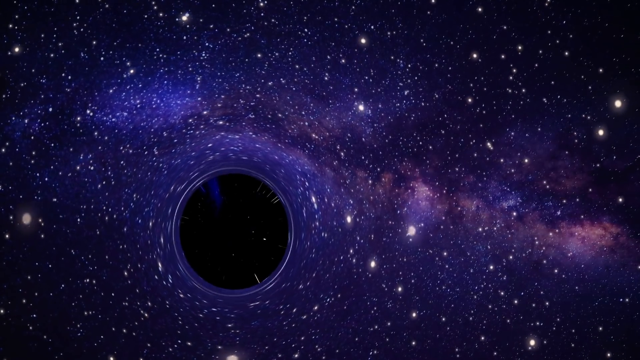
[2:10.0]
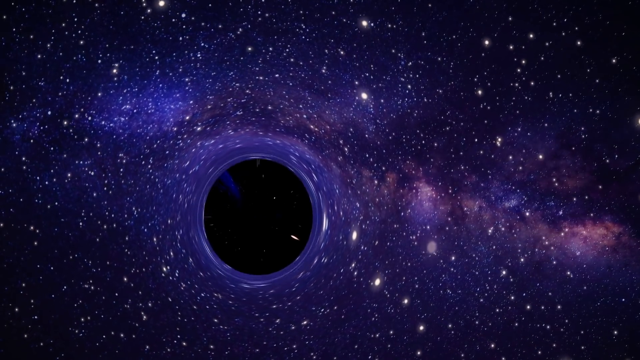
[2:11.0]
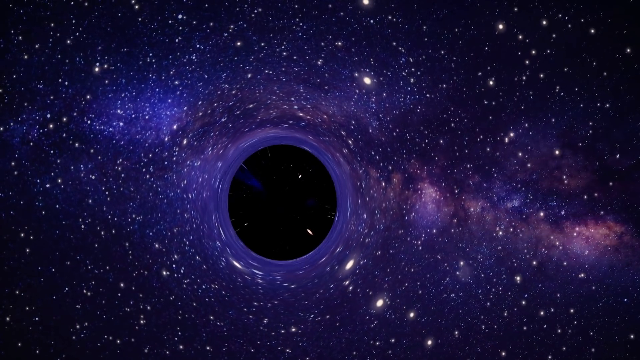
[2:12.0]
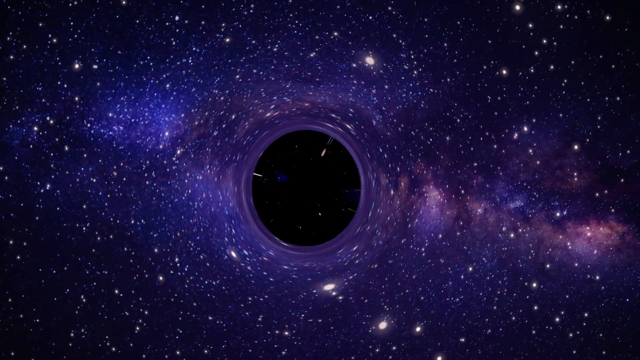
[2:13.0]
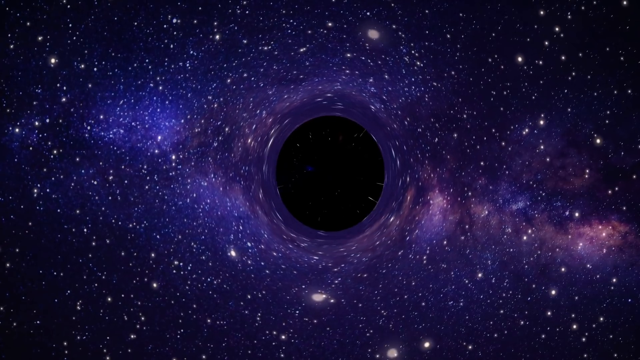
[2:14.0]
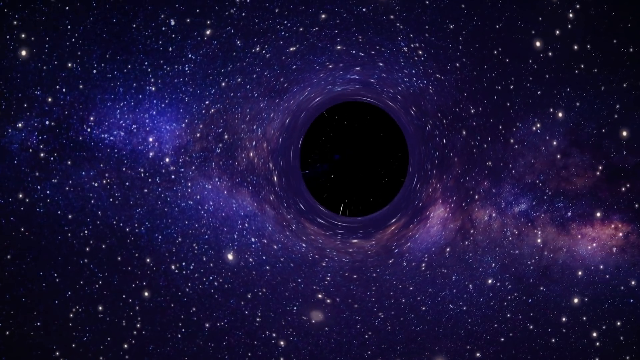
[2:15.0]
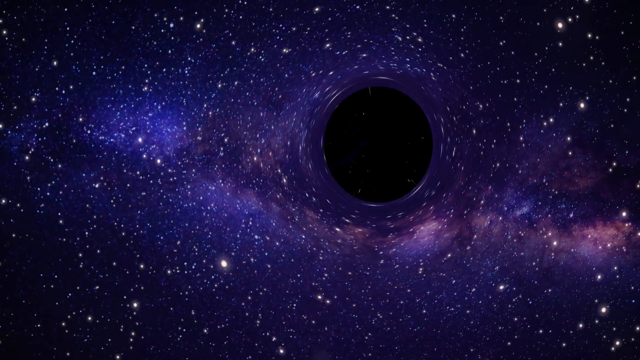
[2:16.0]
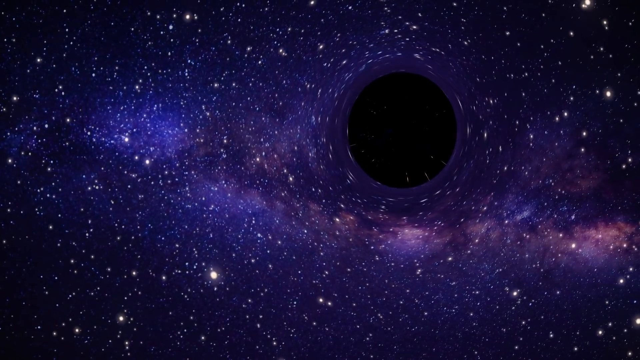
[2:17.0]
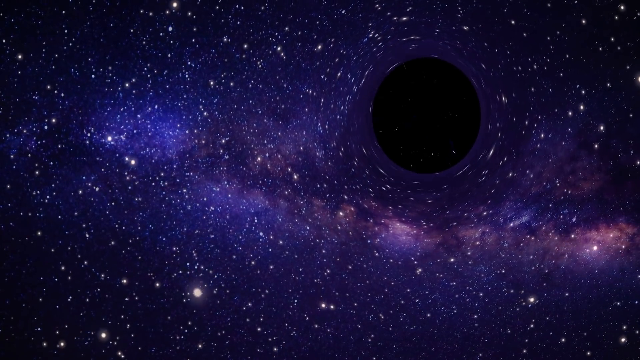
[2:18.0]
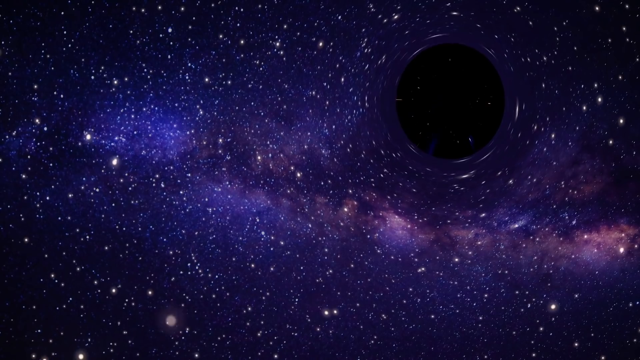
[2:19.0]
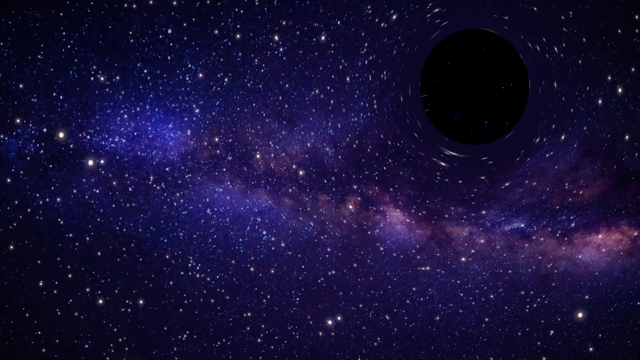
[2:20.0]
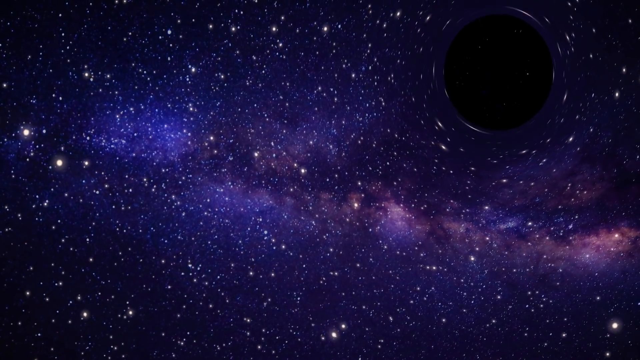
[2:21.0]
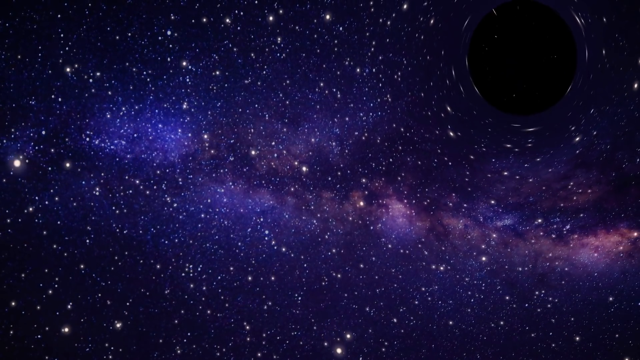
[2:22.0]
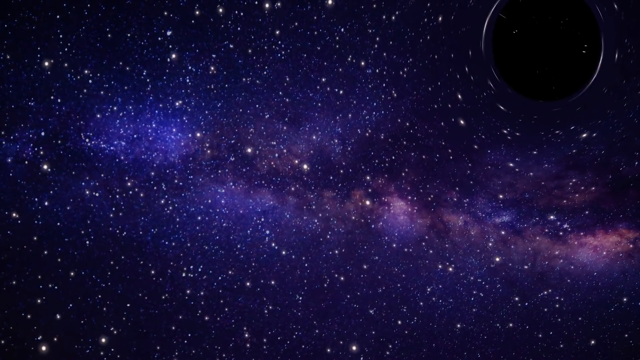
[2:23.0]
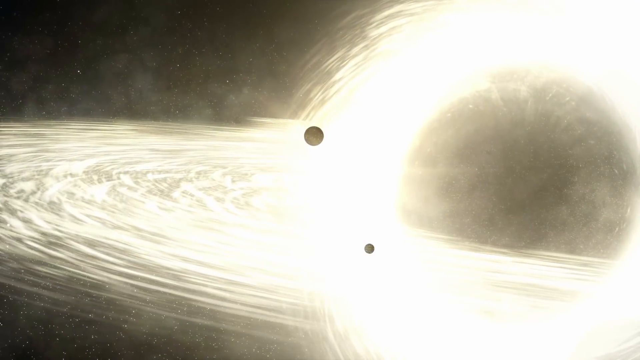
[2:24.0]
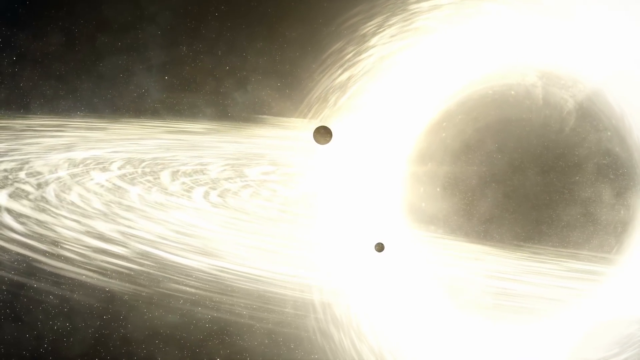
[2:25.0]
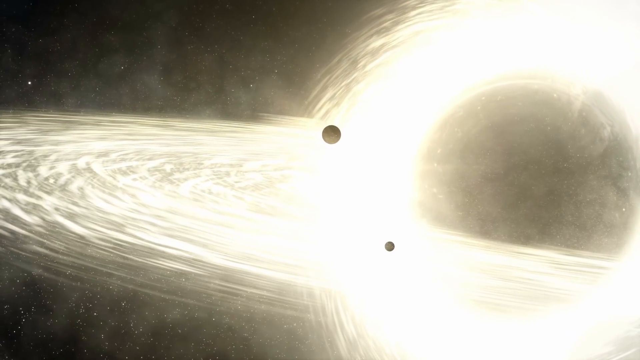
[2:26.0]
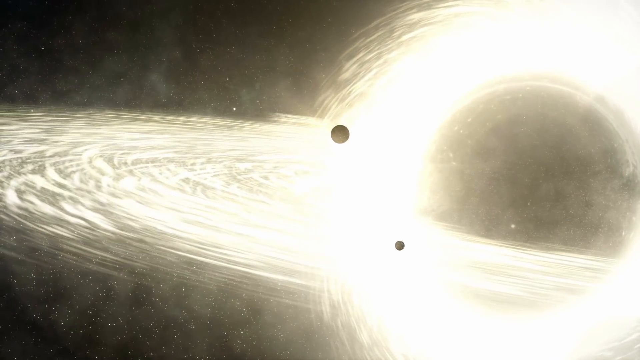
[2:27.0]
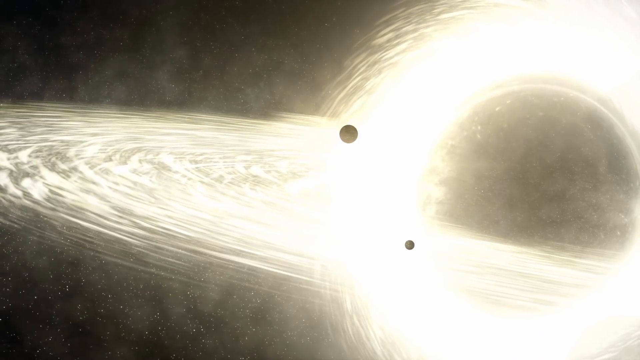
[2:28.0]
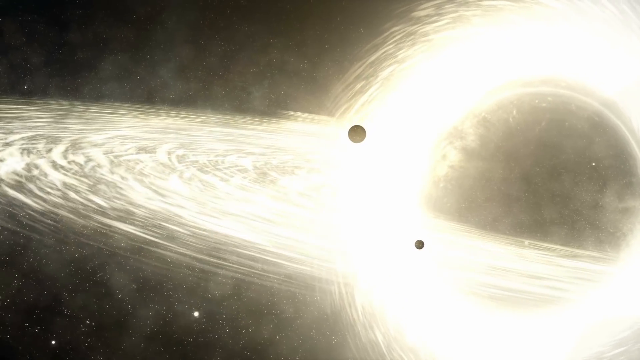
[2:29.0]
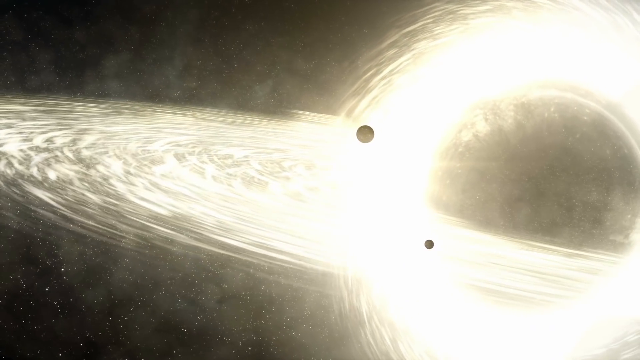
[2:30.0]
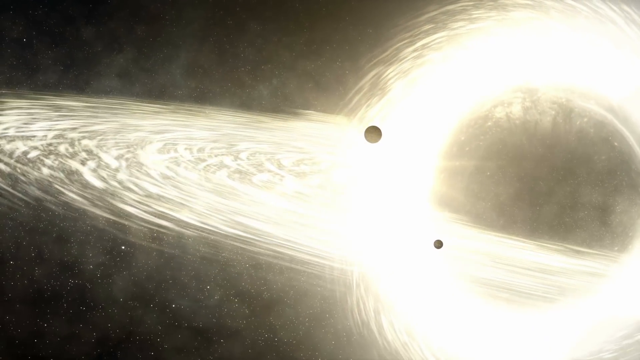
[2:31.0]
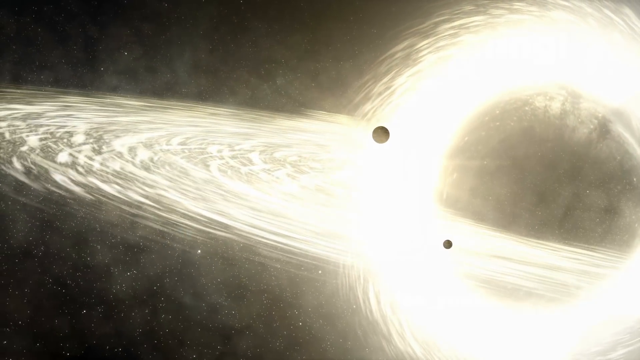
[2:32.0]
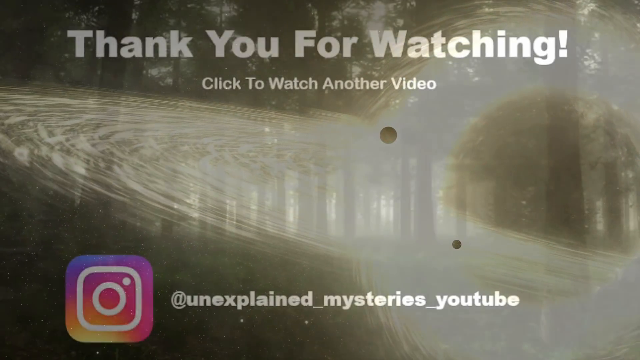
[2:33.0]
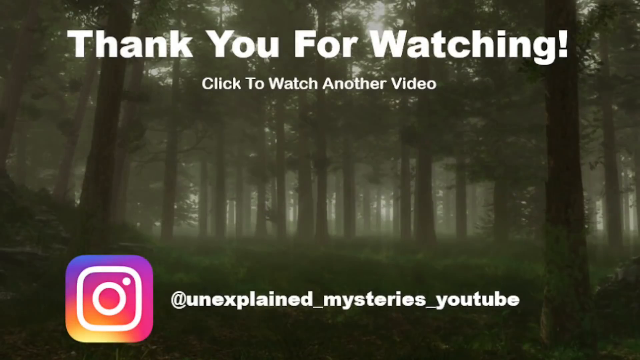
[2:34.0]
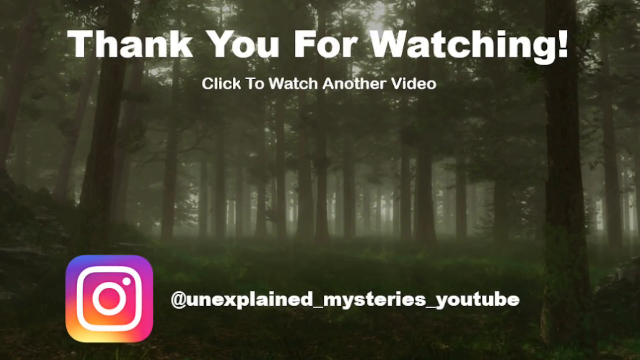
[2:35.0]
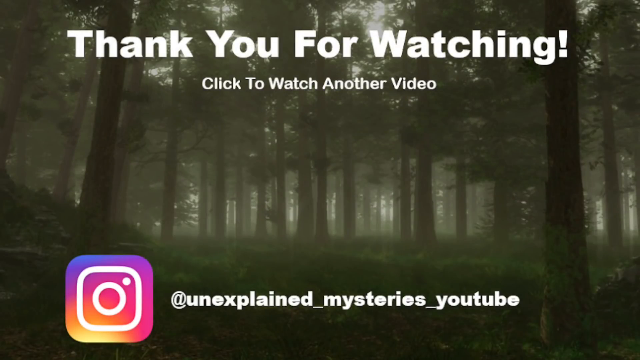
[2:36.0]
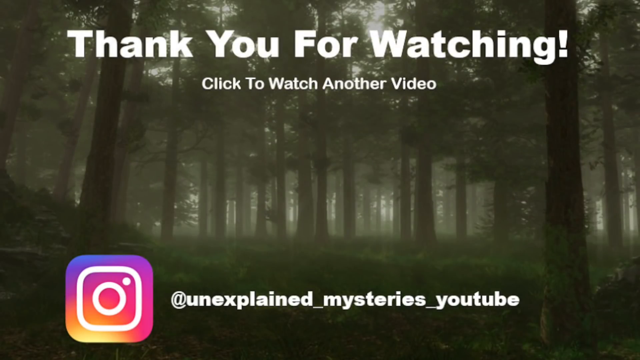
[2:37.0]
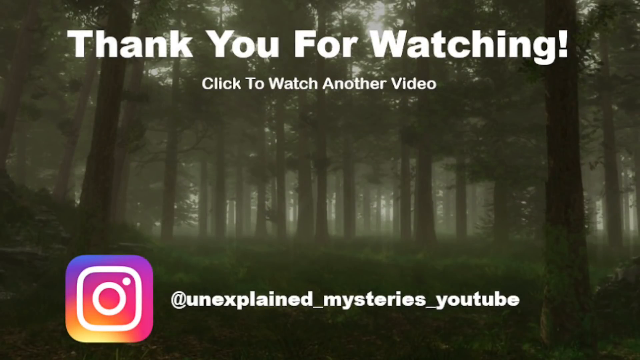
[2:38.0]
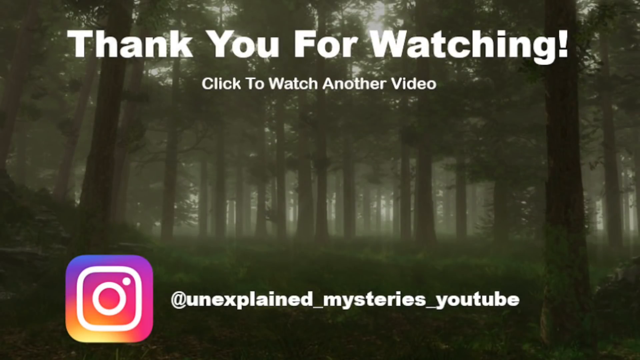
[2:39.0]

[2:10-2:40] The black circle starts from the lower left side of the video and moves diagonally up across the screen to the upper right side, almost as if its path cuts the video in half. Then something really bright appears, possibly the sun: the middle is black and the outside is super intense bright light, with the outer layers yellow and the part closer in white, like the hottest part of a fire. Two circles go by it. Then the background changes to a bunch of trees instead of space, and text reads "thank you for watching, click to watch another video".